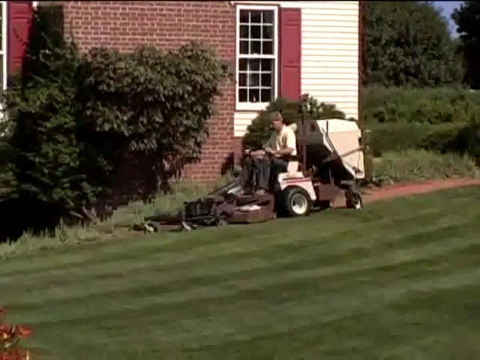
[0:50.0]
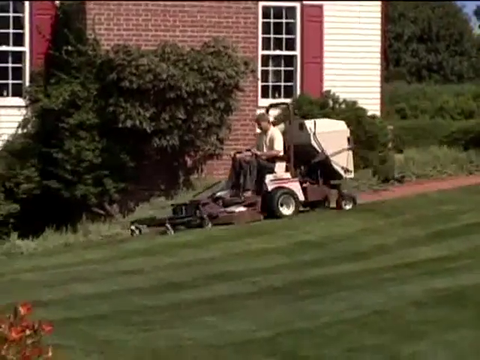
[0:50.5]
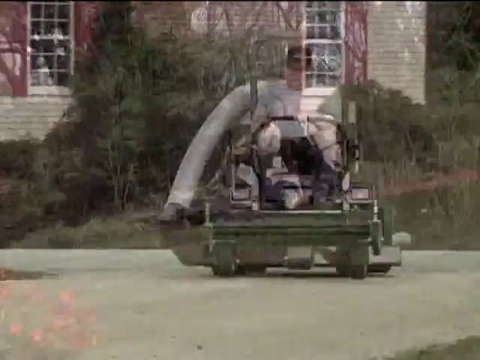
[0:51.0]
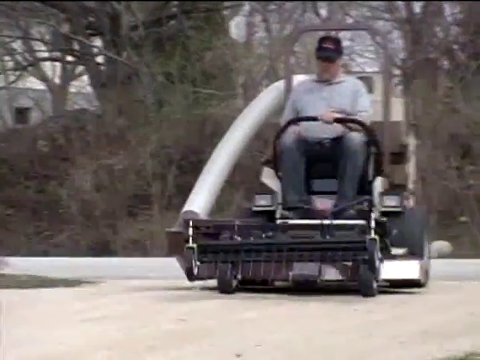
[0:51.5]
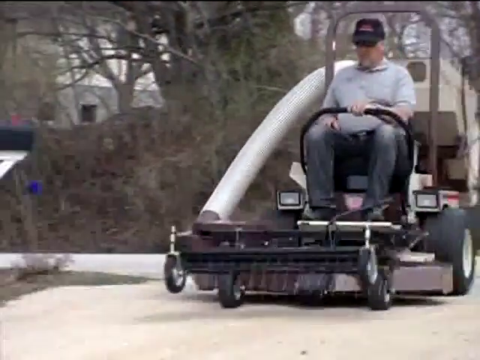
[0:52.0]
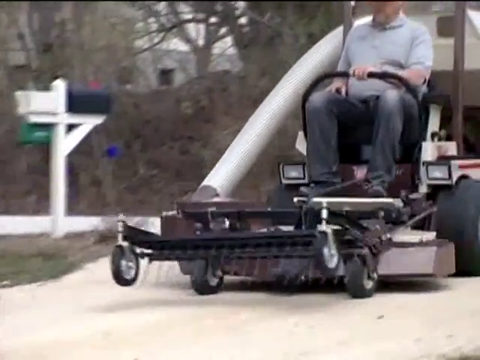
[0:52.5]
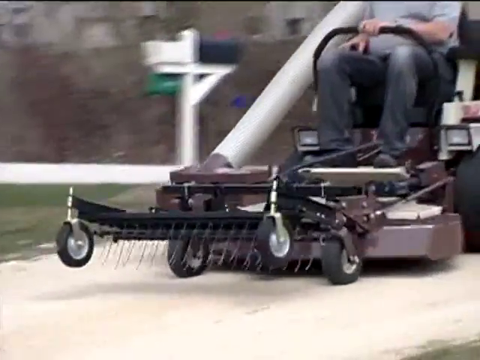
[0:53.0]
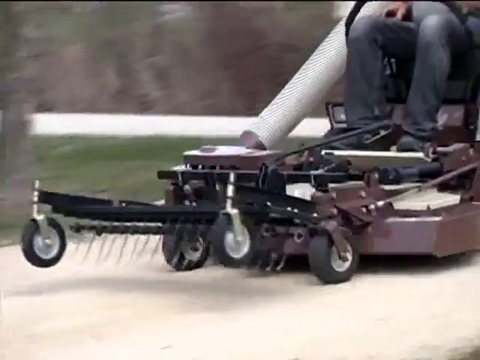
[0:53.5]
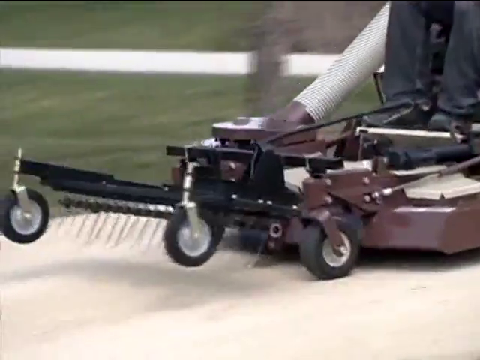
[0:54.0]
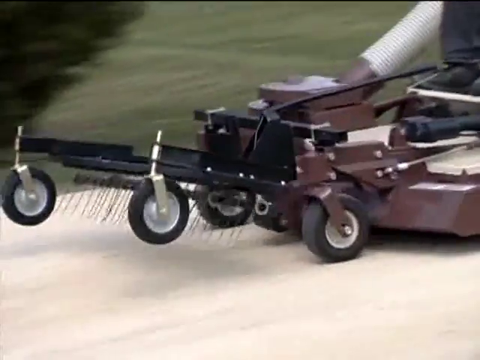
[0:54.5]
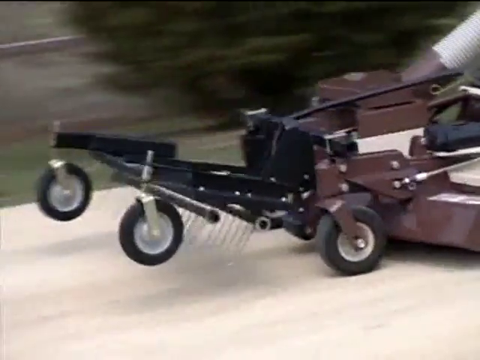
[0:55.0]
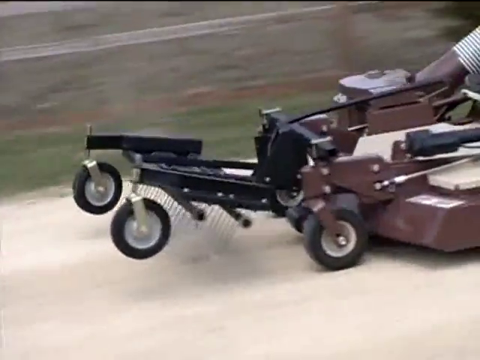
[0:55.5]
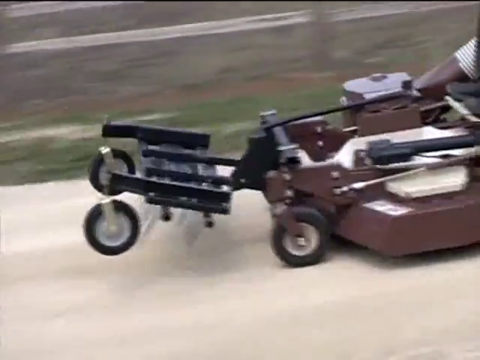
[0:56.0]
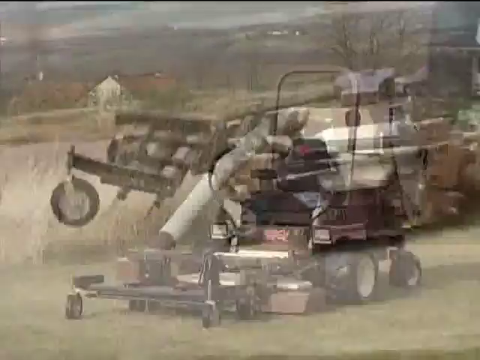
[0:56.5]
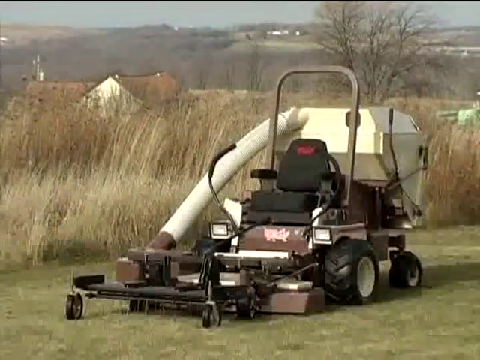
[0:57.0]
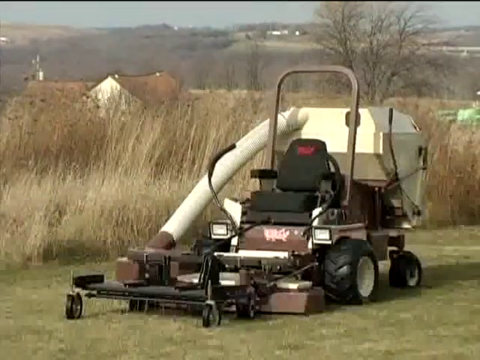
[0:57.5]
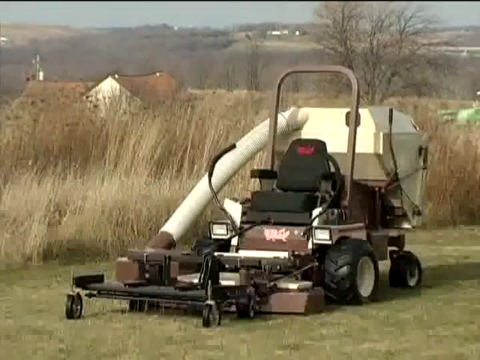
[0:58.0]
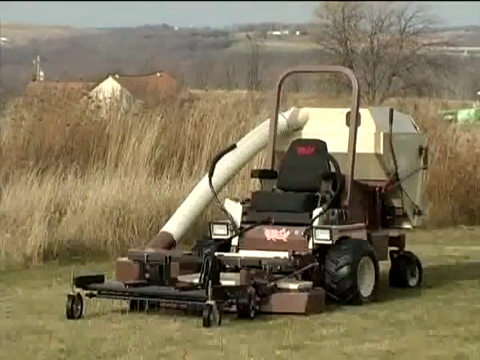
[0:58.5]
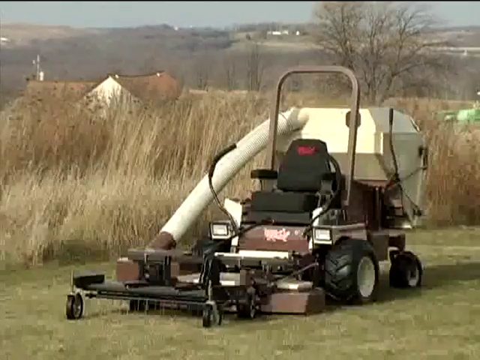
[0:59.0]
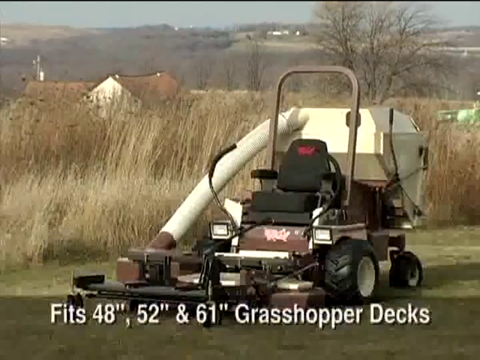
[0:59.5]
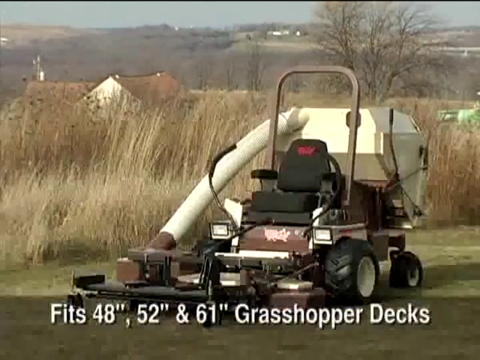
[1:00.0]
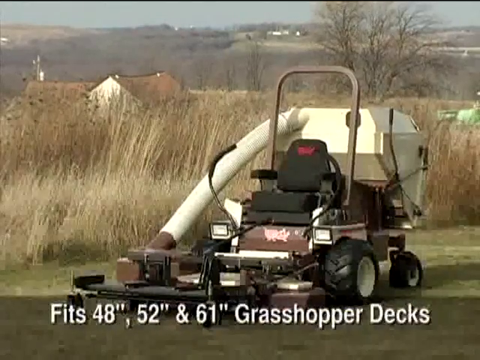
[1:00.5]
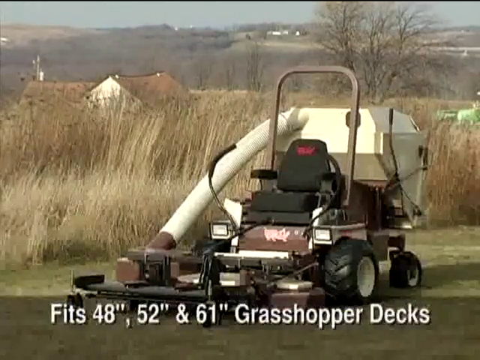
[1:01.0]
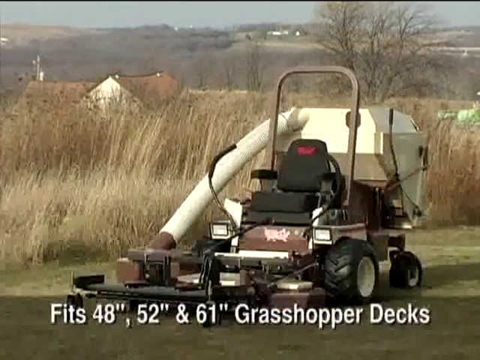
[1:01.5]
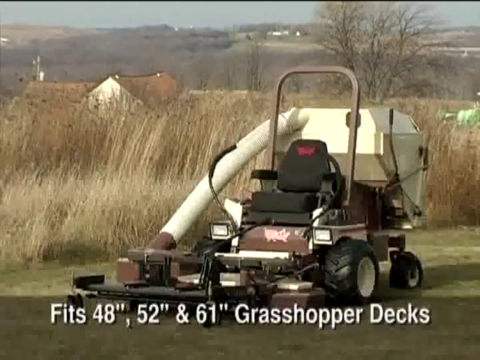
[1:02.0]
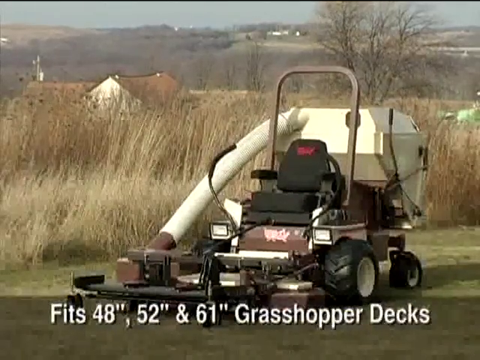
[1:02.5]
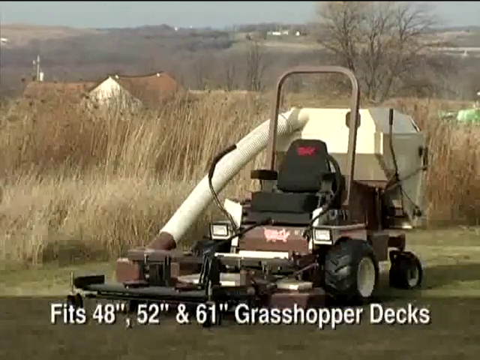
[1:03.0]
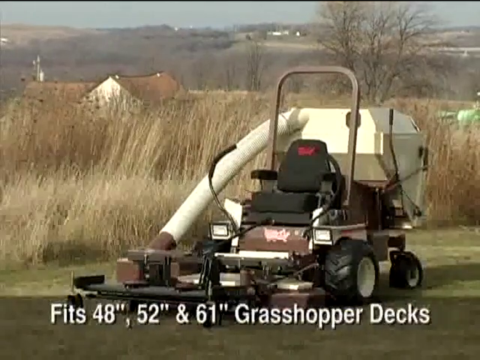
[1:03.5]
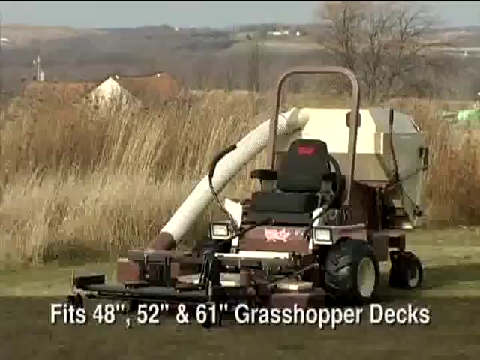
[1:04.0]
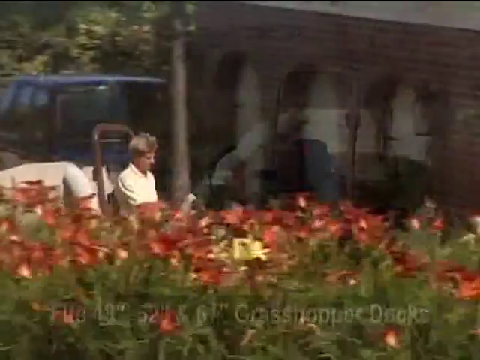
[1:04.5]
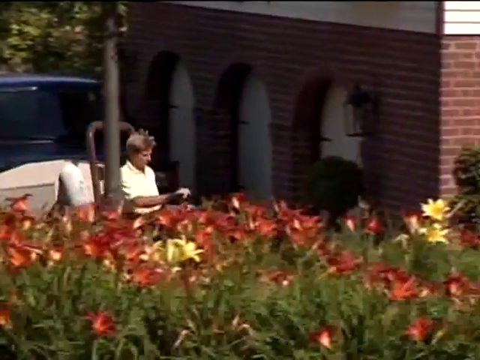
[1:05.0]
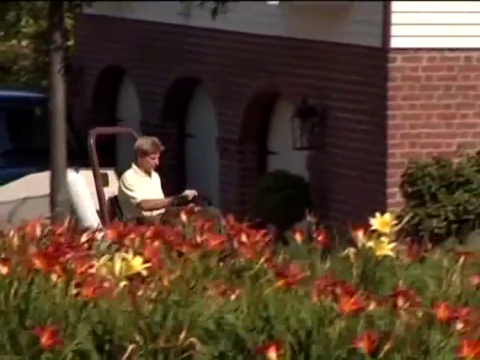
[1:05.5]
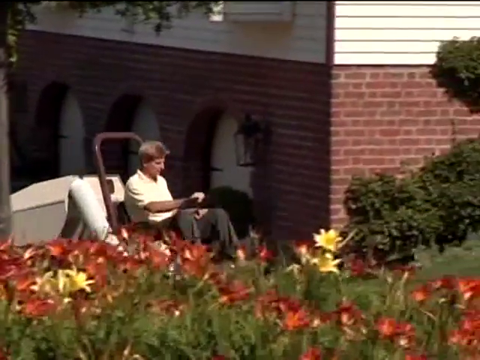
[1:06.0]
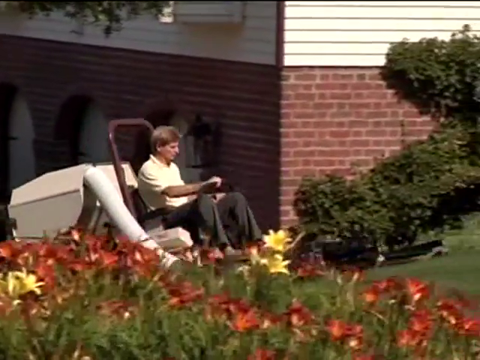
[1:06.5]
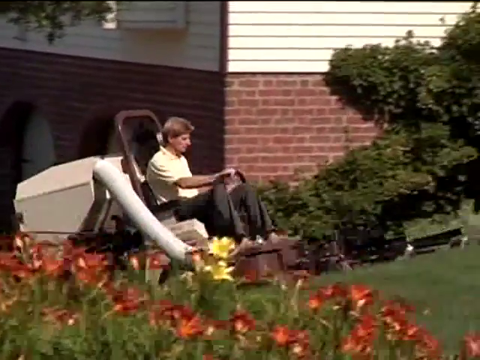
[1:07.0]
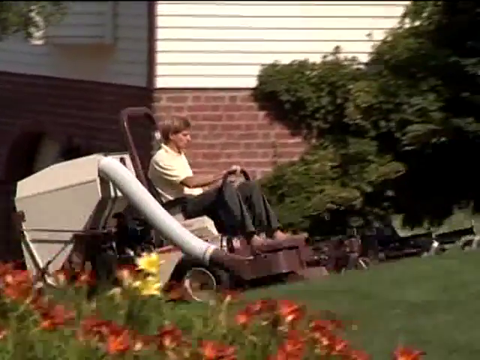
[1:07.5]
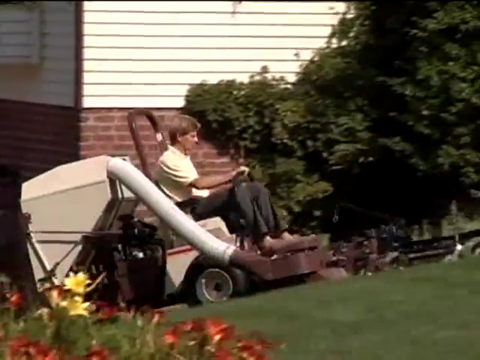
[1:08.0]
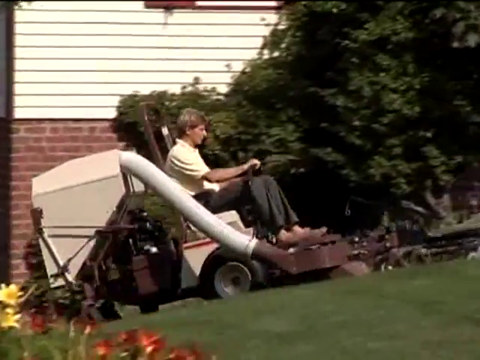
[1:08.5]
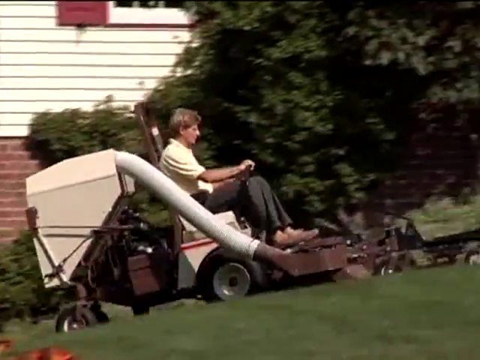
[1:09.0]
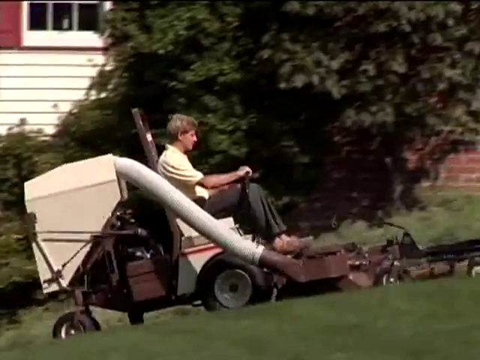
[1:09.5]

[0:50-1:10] A person rides the lawnmower on a paved area with the front tool lifted up. The lawnmower has two headlights on the front, one on each side, a black chair with red text on the backrest, and two handlebars on the front that control the direction of the wheels. Text at the bottom reads "fits 48 inch 52 inch and 61 inches of grasshopper decks". The person then rides the machine on a small mountain with the dethatcher connected. A quite large tank is behind the driver's seat, with a pipe that connects to the front of the lawnmower.